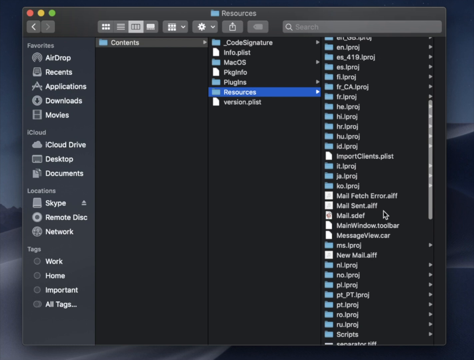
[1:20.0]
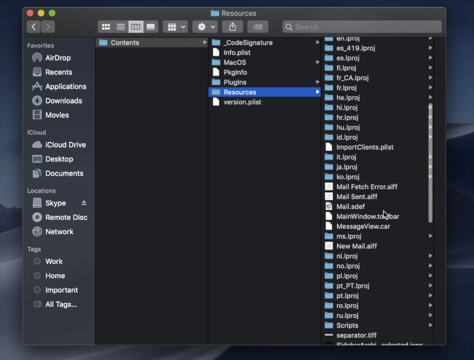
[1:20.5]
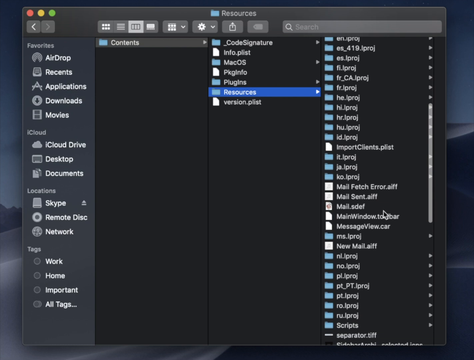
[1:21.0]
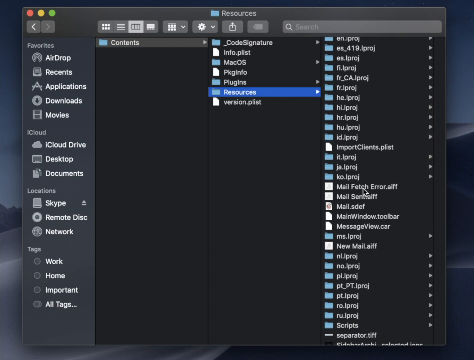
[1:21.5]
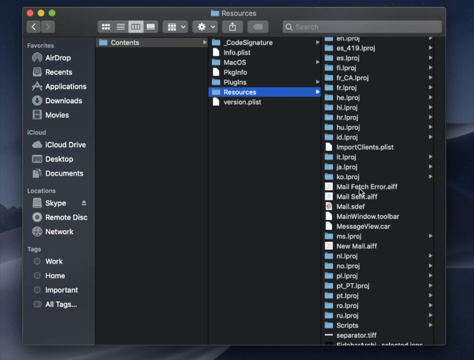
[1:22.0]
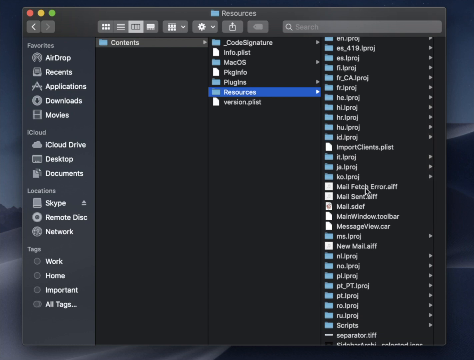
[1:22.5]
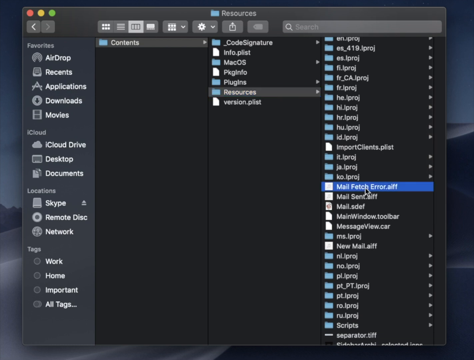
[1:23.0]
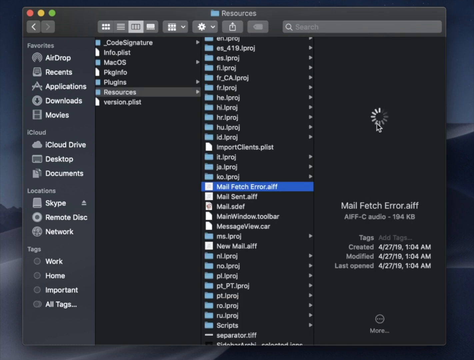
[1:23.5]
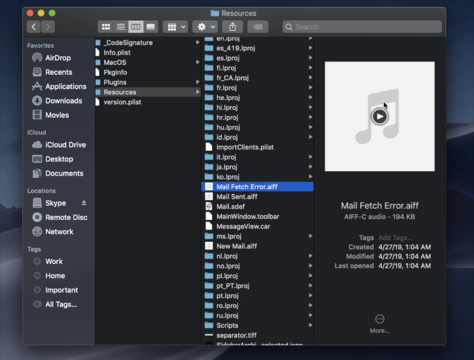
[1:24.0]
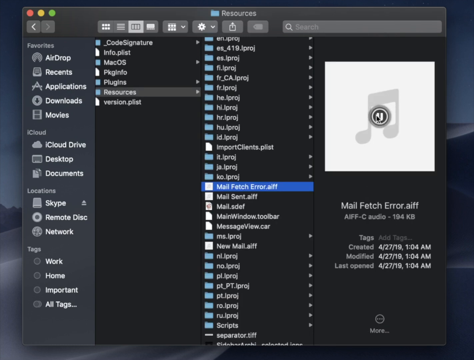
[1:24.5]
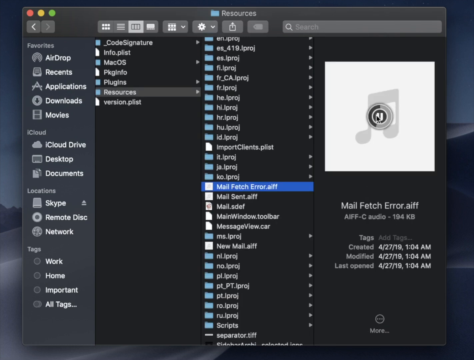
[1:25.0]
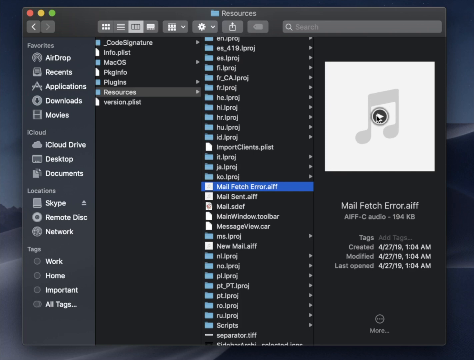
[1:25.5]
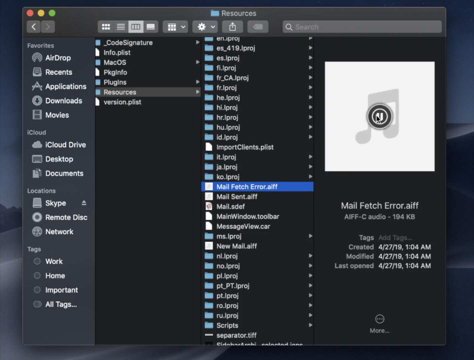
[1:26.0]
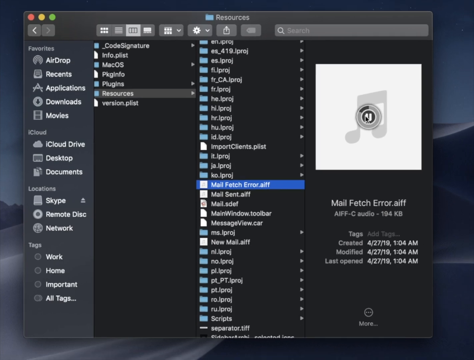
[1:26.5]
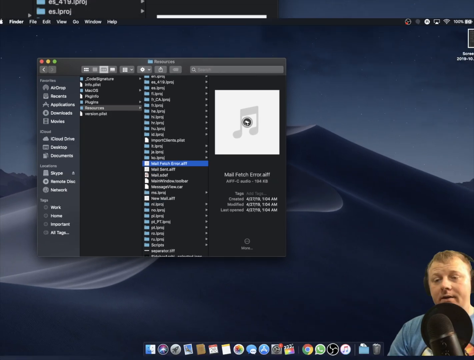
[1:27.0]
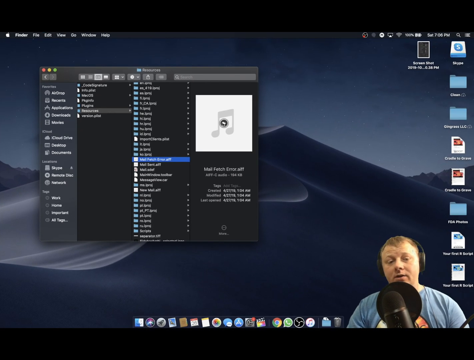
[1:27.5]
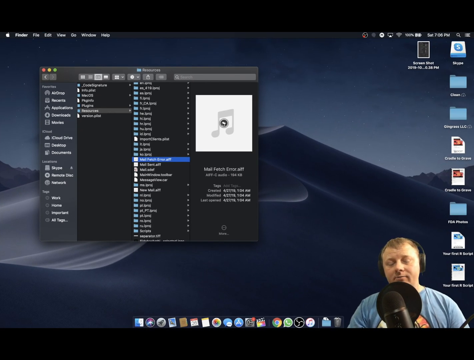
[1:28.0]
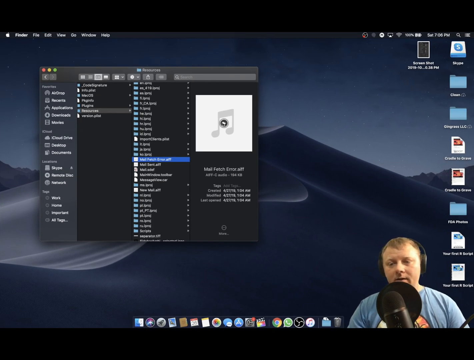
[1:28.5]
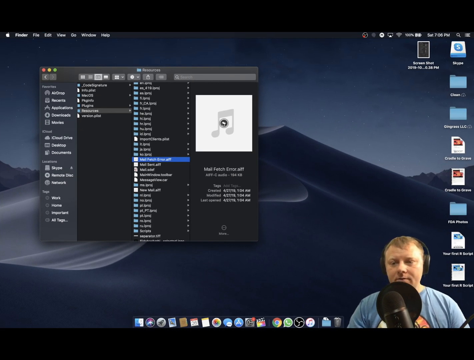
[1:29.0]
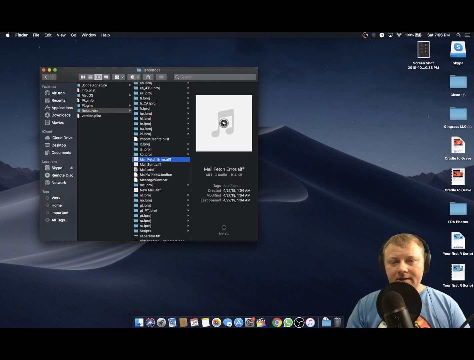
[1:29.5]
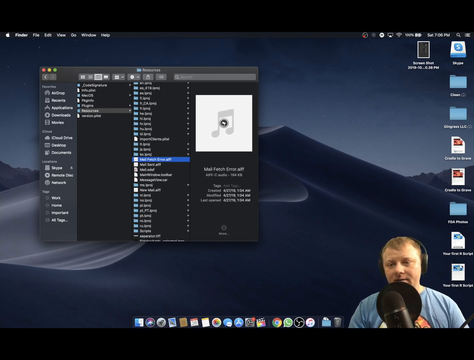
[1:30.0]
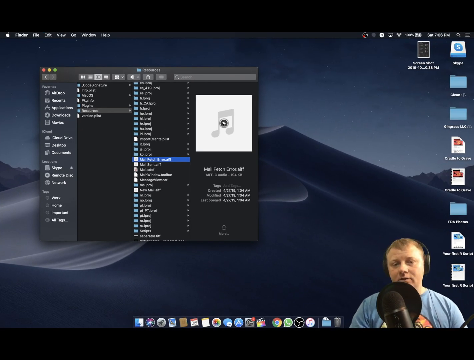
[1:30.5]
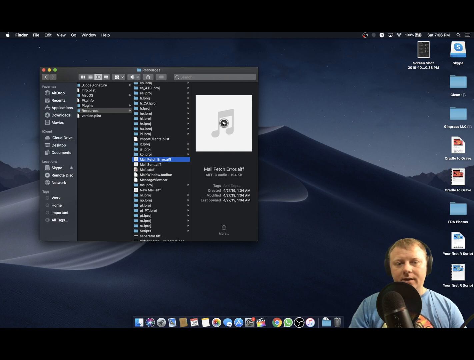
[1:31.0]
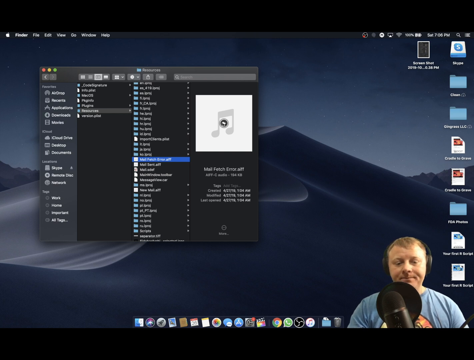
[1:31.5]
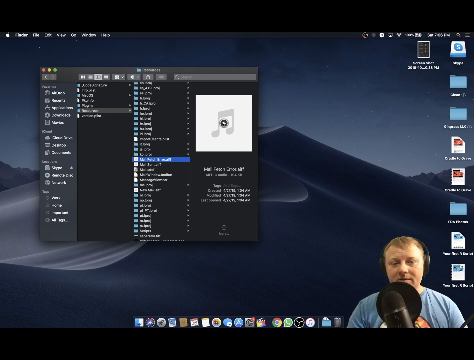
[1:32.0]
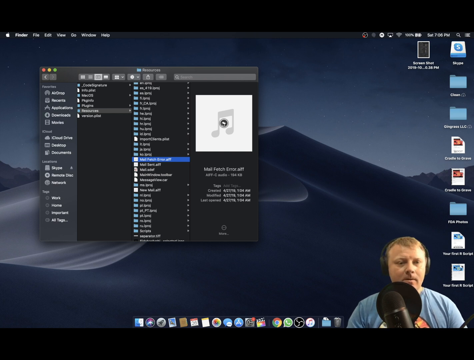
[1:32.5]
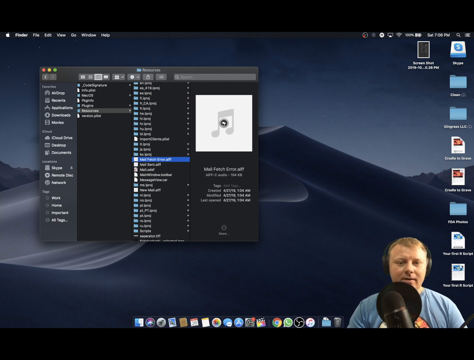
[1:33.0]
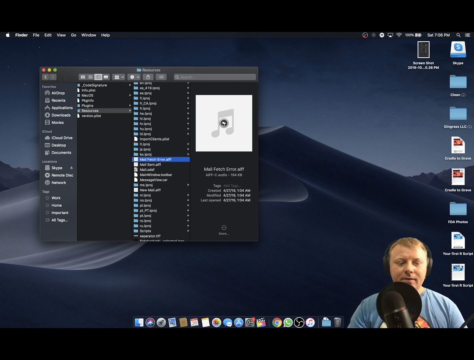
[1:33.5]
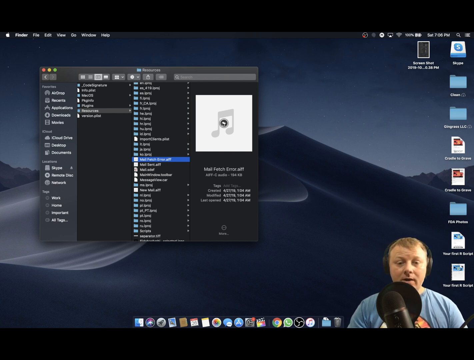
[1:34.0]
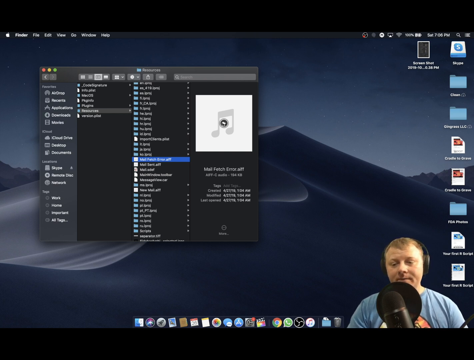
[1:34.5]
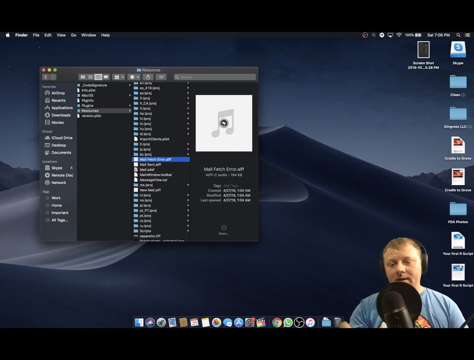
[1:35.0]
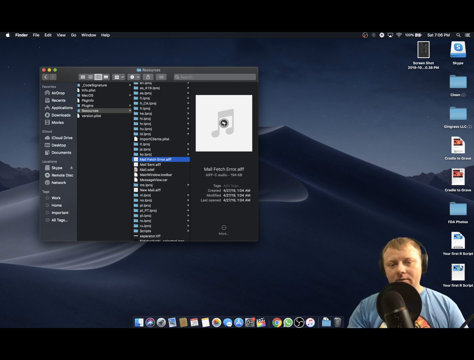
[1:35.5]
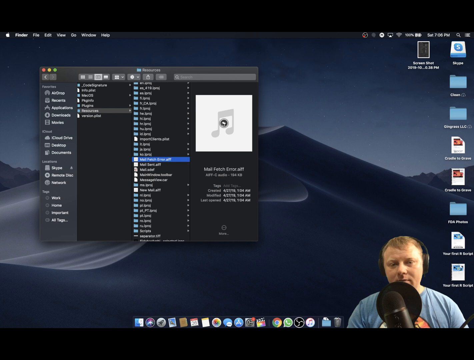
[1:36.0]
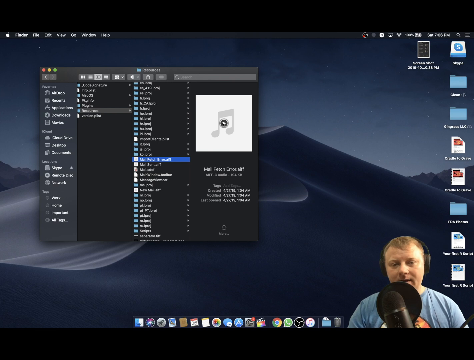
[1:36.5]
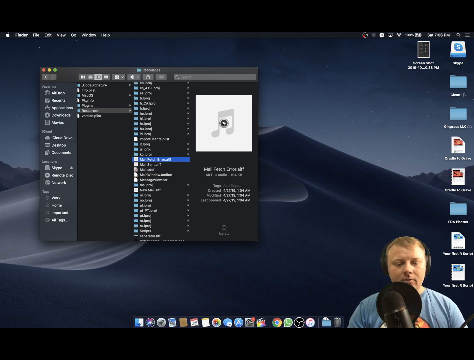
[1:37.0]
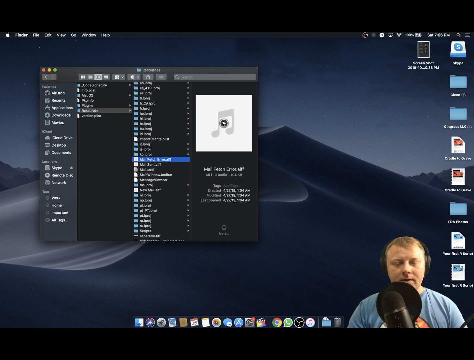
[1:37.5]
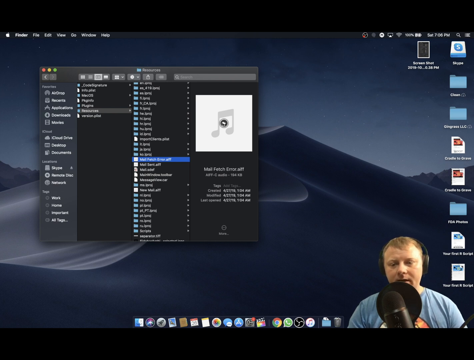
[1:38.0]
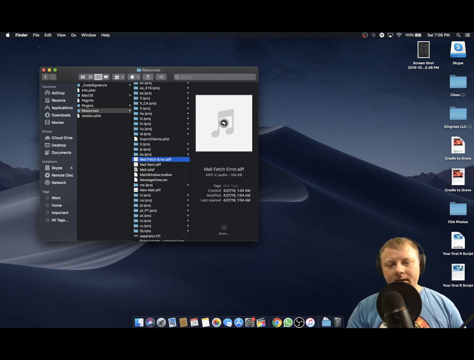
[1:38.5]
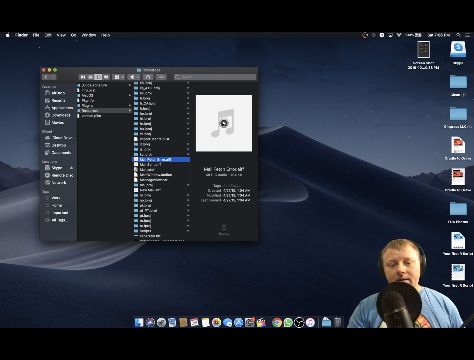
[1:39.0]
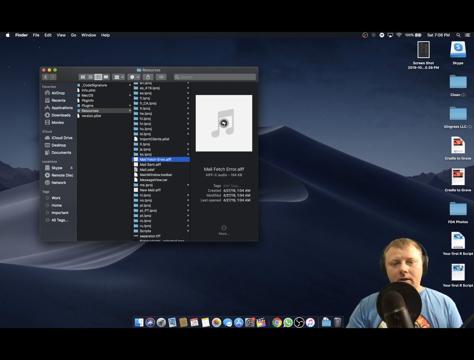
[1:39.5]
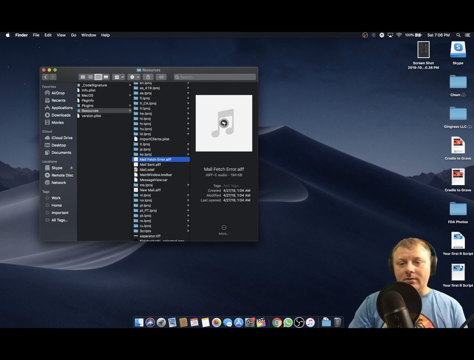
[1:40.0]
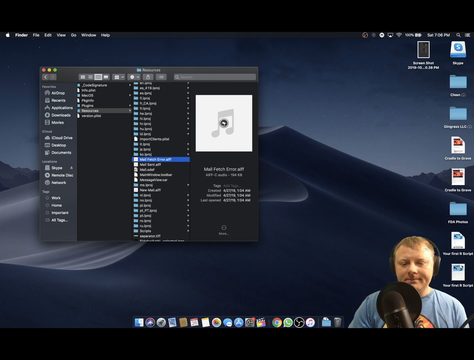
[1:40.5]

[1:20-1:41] The man scrolls vertically and finds the file mailfetch.aiff, which shows details: its size is 194 kilobytes, there is no text associated with it, and it was created, modified and last opened on April 27th, 2019, at 1:04 a.m. It looks like he plays the file, and he then appears to start talking, possibly concluding the tutorial. The Mail package contents seem to have a different structure and different audio files. After he finds the file he wants, the video zooms out from the zoomed-in view of Finder and the files to the regular view showing the whole desktop, where his small image, cropped to his body, is visible.